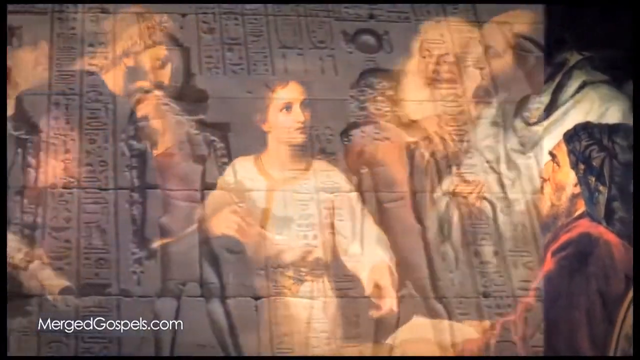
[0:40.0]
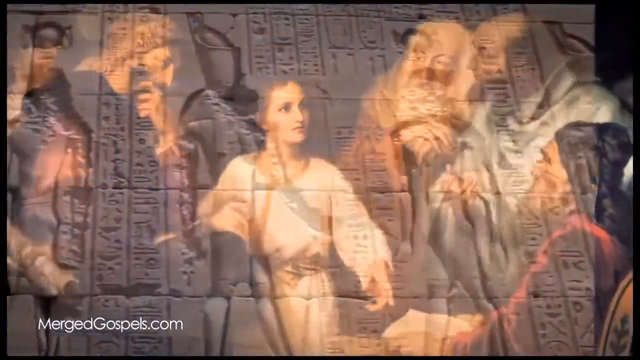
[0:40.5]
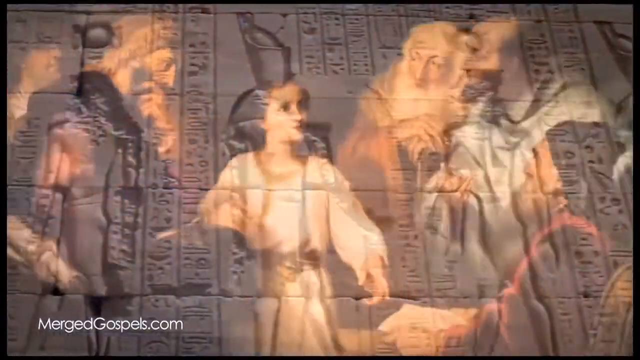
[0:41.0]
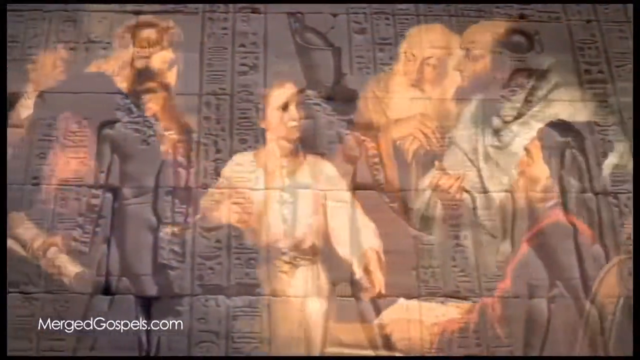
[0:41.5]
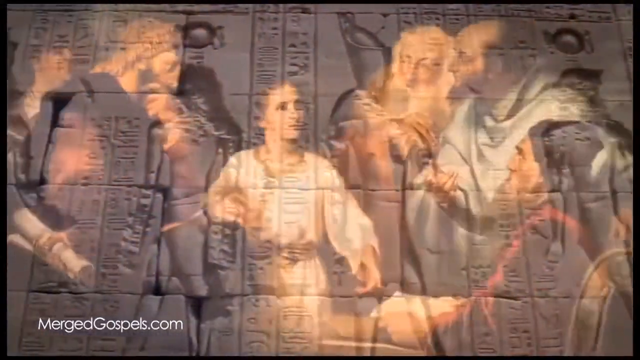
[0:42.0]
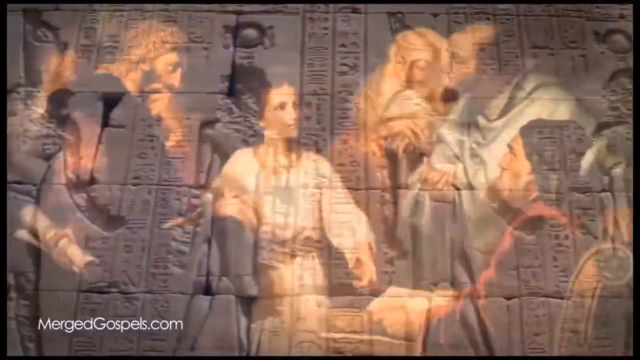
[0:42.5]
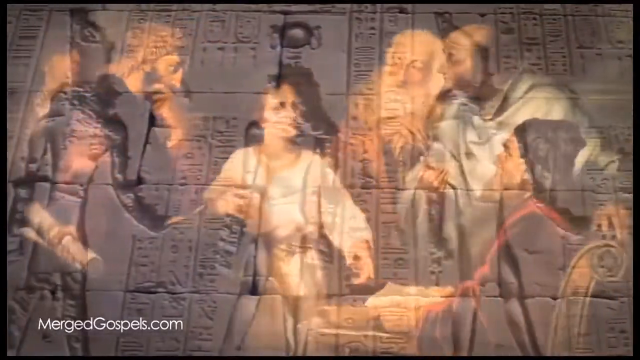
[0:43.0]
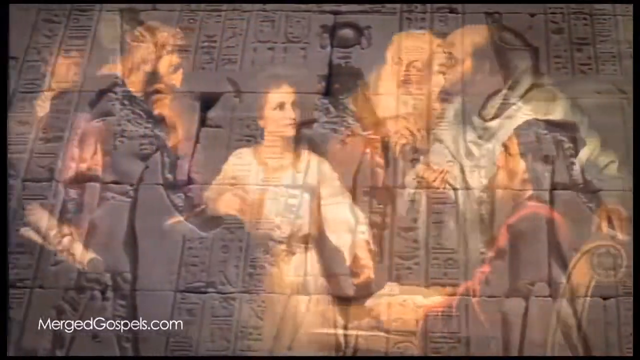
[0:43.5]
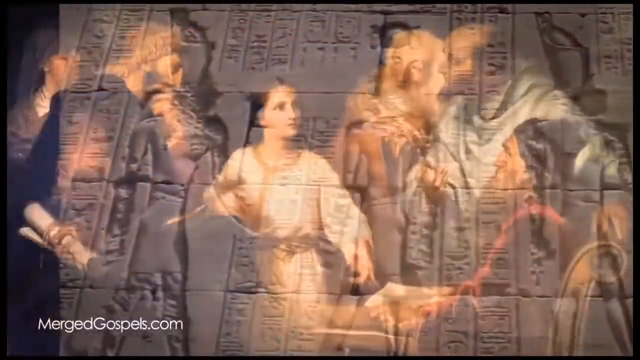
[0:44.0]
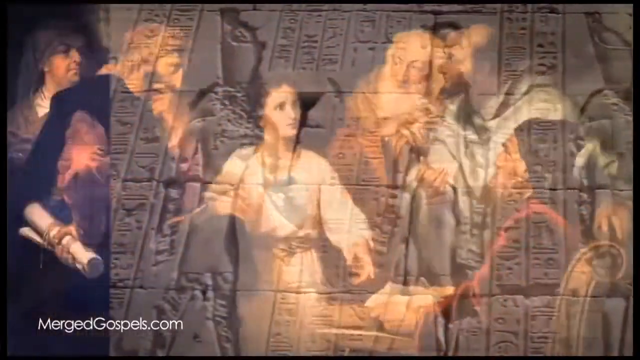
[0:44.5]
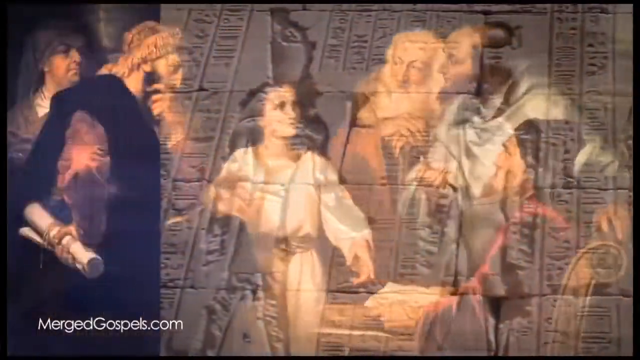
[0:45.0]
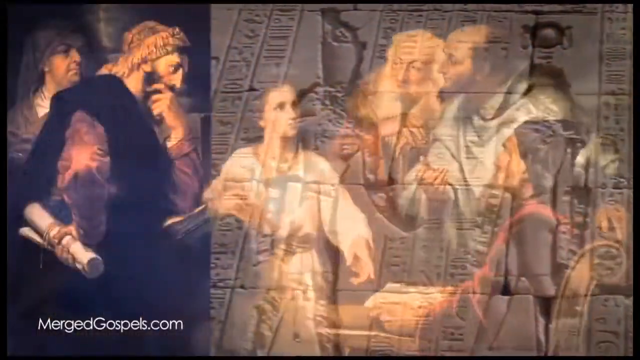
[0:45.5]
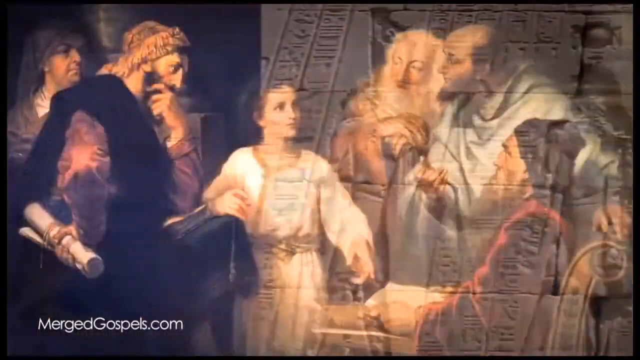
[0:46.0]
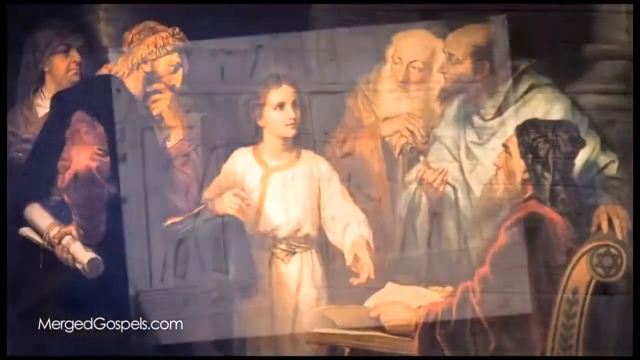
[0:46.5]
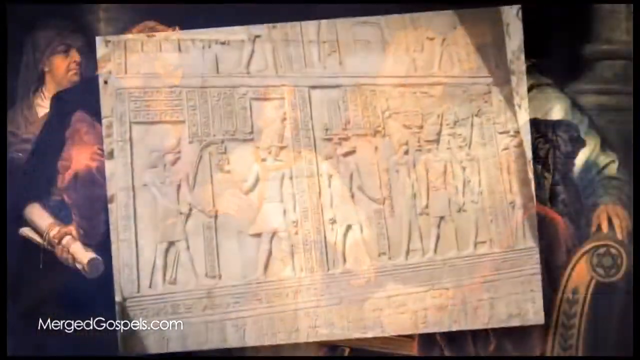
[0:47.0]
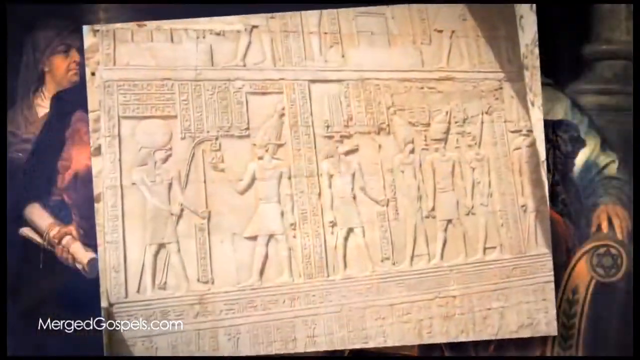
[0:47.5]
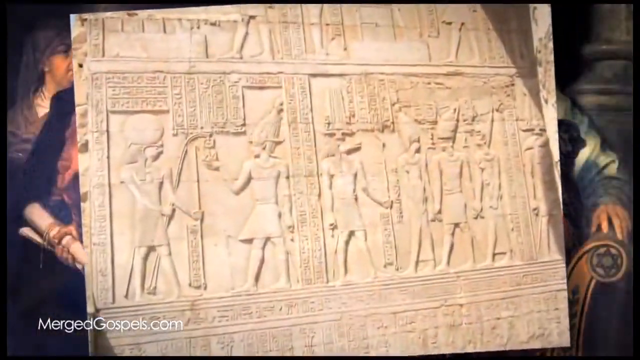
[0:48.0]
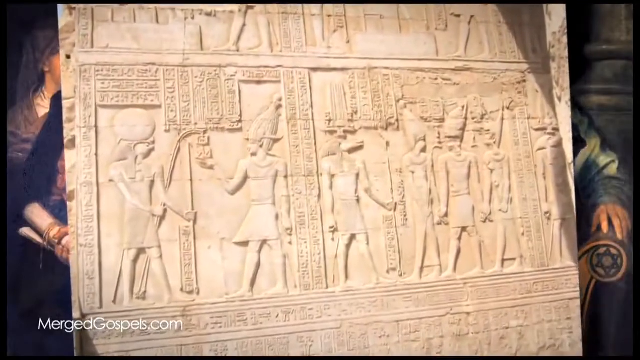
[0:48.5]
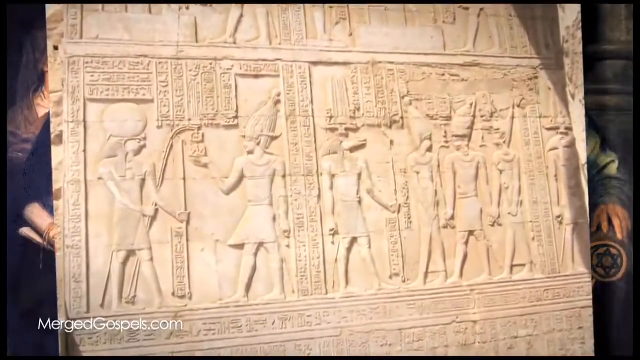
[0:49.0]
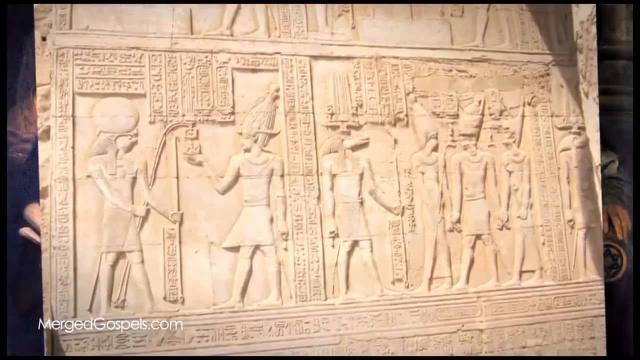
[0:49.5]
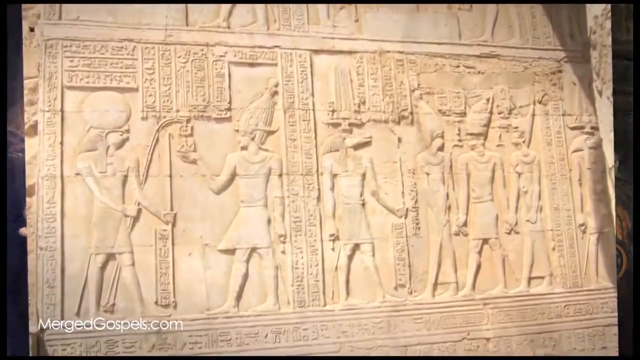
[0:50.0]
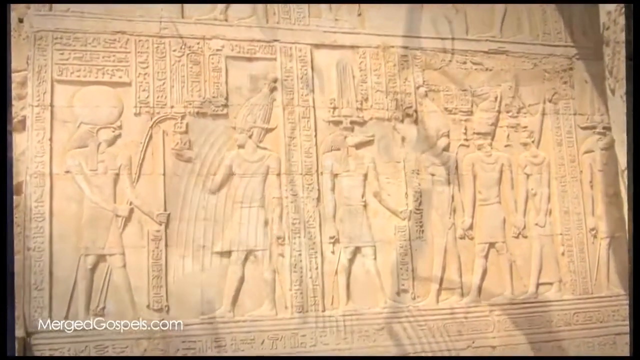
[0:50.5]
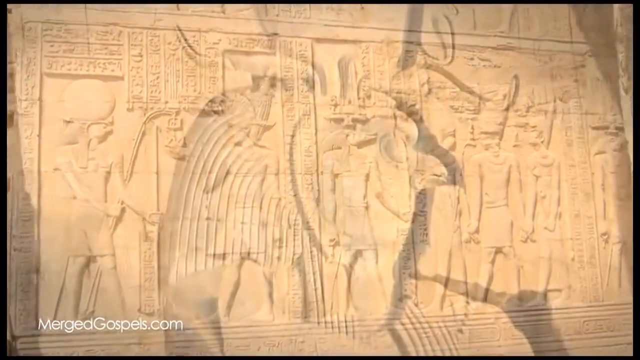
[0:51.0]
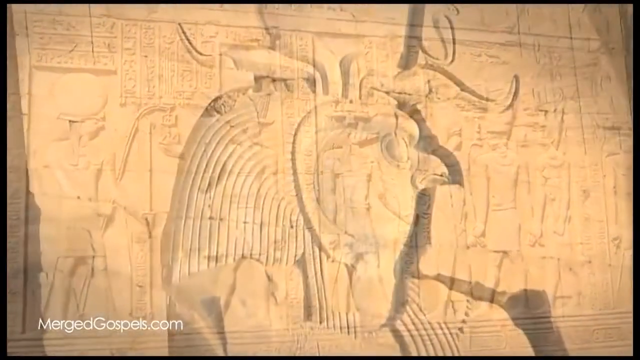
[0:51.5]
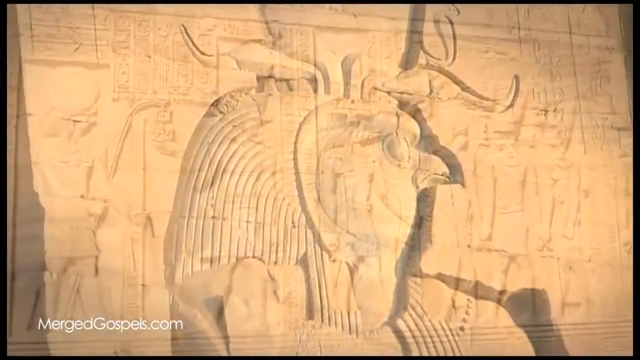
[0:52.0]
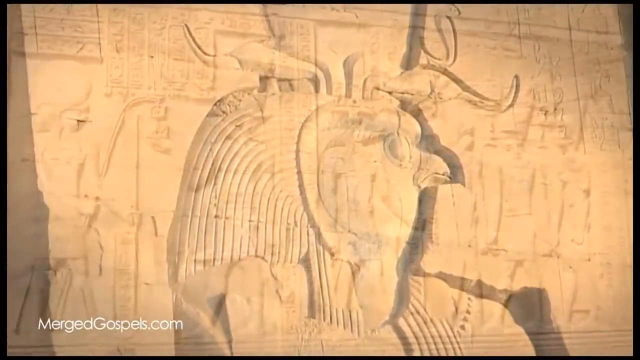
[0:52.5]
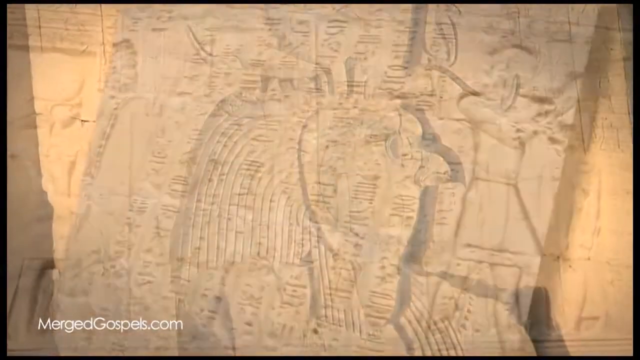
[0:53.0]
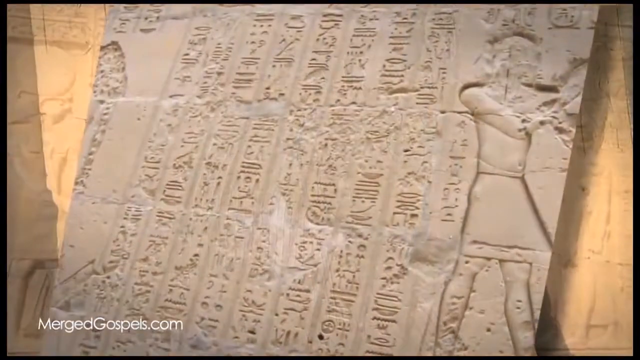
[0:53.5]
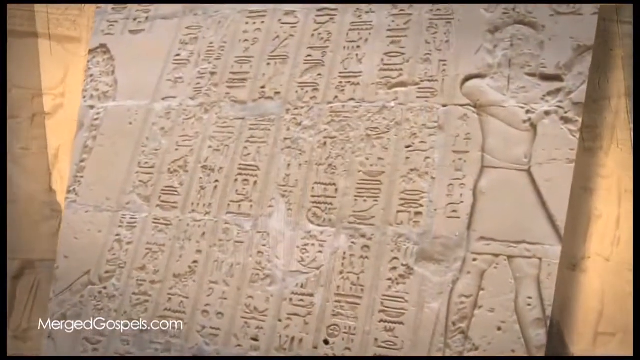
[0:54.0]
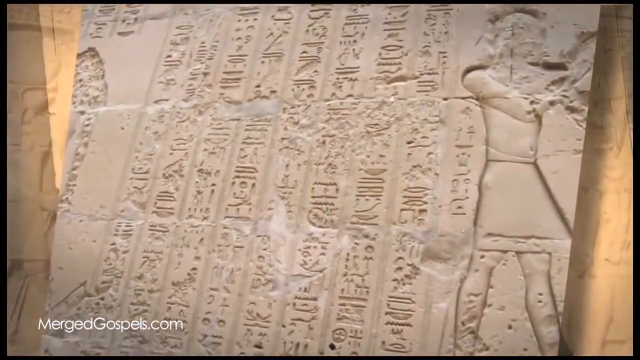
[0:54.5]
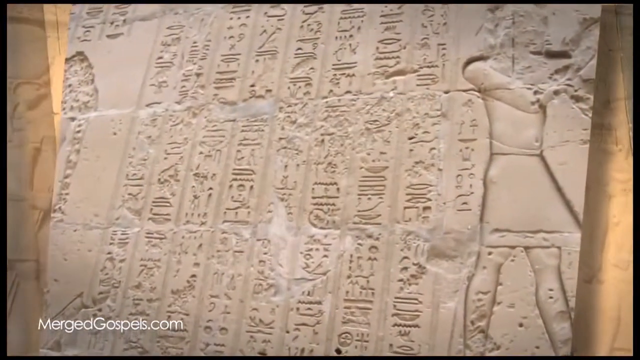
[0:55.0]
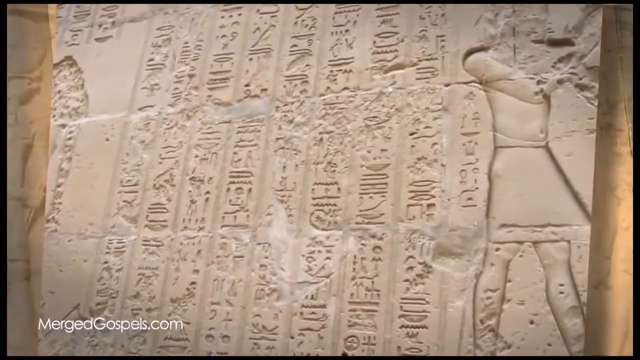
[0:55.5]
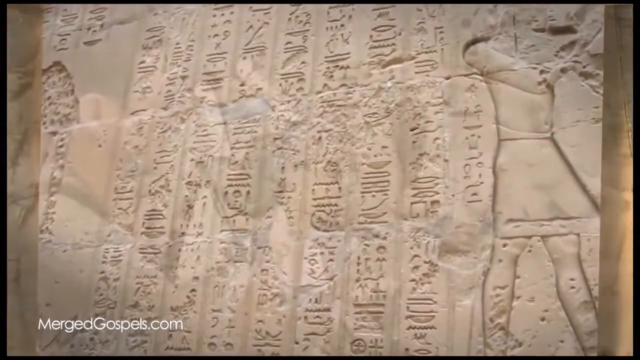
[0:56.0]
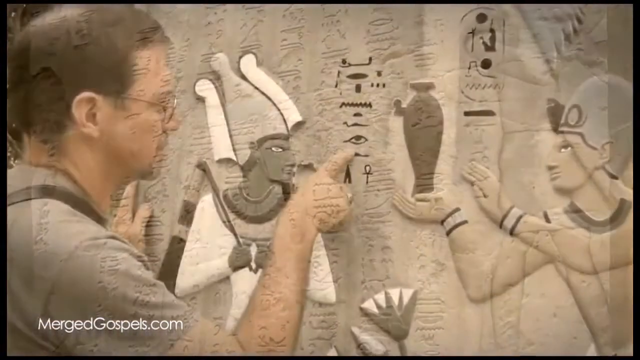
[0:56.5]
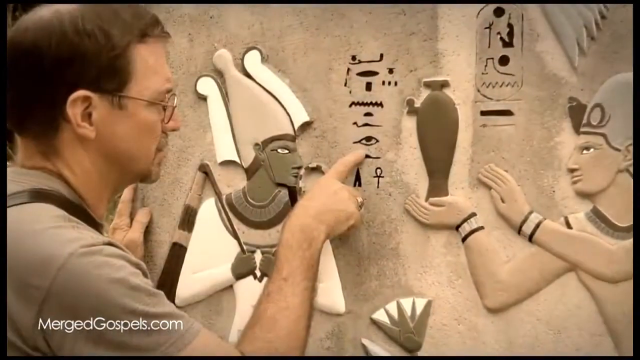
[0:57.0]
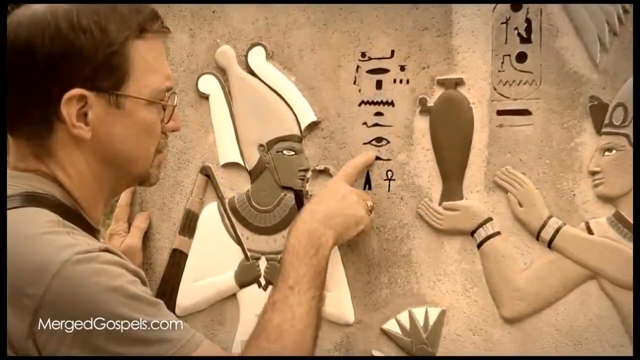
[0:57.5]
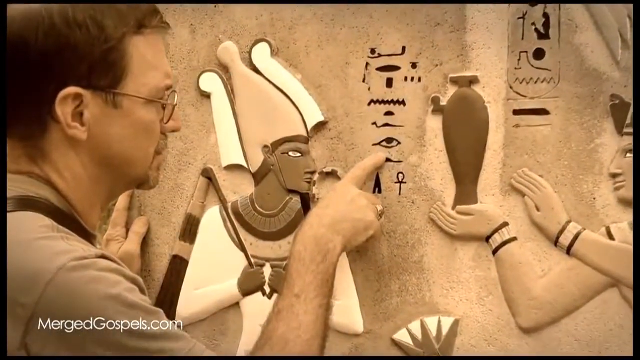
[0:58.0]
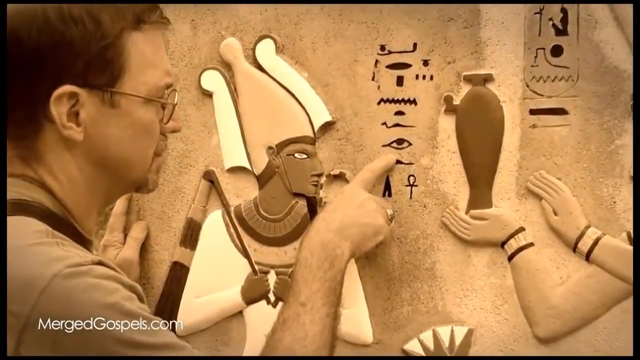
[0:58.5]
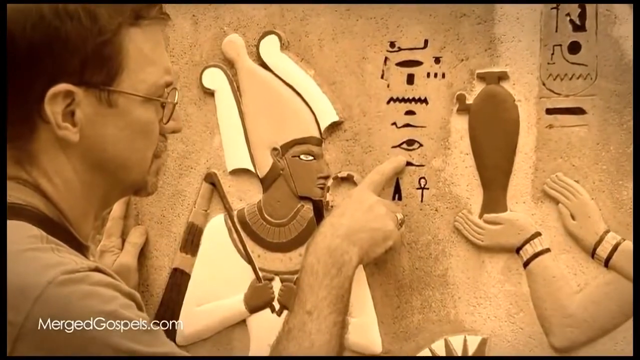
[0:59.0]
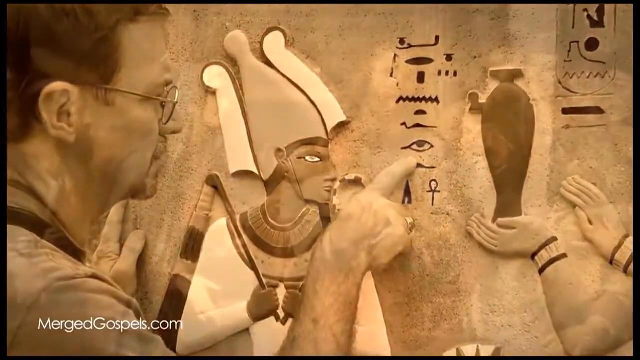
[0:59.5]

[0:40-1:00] The painting fades away as the camera zooms out, showing more of the background behind it in a layered effect where both are partially visible: hieroglyphics on an Egyptian pyramid. The Renaissance painting then becomes clearer before a small image of carvings on a pyramid begins very small in the centre of the screen and zooms out fully until it is over the top of the painting. The carving is in two parts. On the left-hand side, two men face each other, one holding a lantern. On the right-hand side, one man stands in front holding a staff of some kind, with three men facing him. The image rotates slightly and takes up the entire screen, becoming the sole focus. Then a shadow of the bird god from earlier appears. The image changes to show an archaeologist at one of these sites, his side profile facing the camera. There is a wall with carvings that have been painted, and next to one of the characters an eye symbol has been drawn. The archaeologist has one hand on the wall and points to the eye with his other hand, facing the eye and looking at it as he points. He has a satchel over his shoulder, glasses, a goatee and brown hair. The image slowly zooms into the man, and a filter gives the image an orange hue.